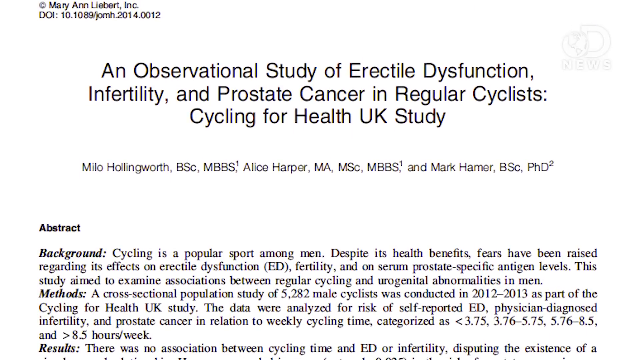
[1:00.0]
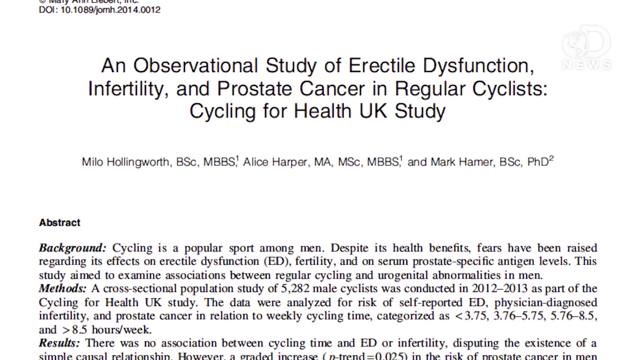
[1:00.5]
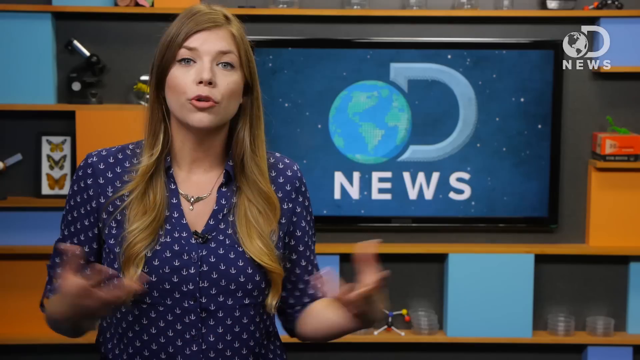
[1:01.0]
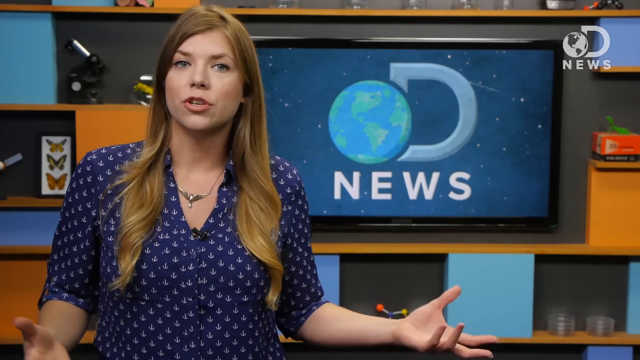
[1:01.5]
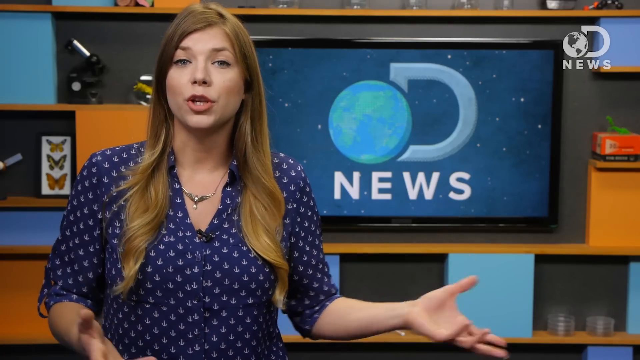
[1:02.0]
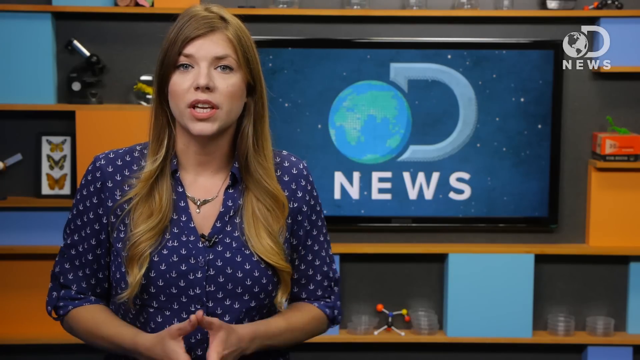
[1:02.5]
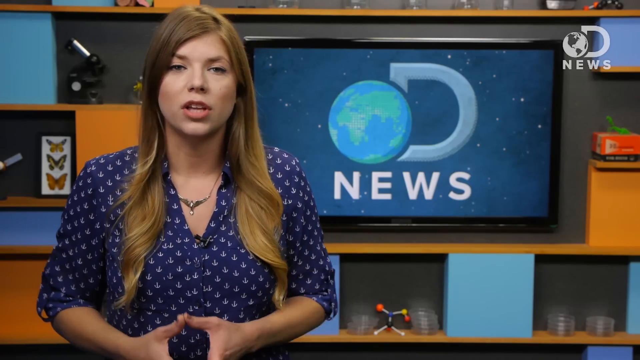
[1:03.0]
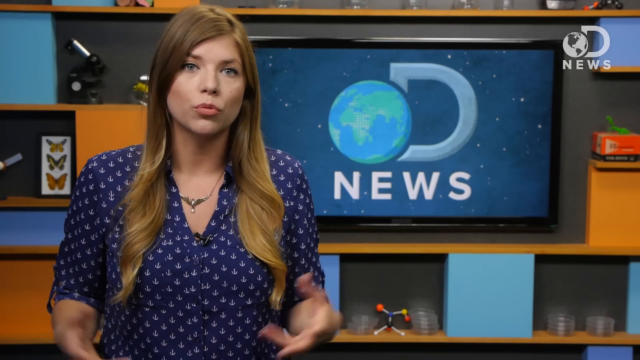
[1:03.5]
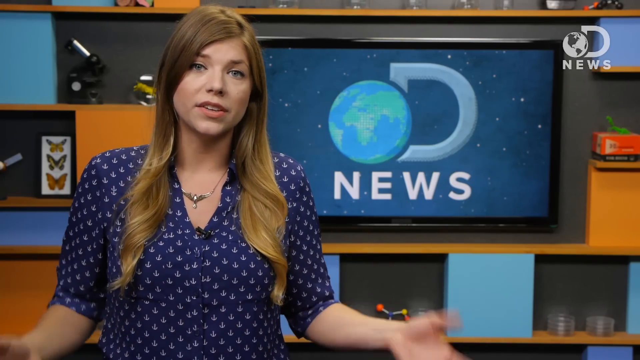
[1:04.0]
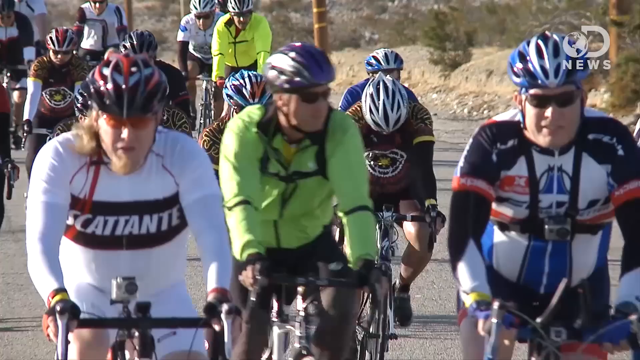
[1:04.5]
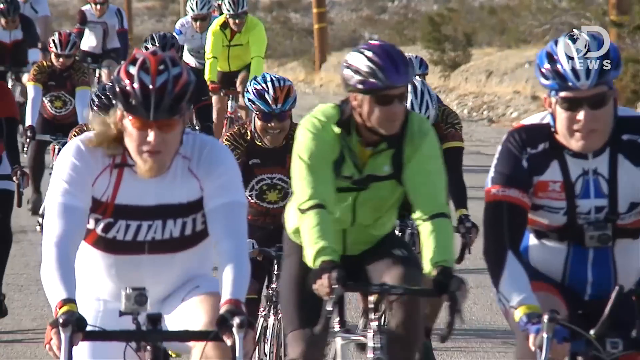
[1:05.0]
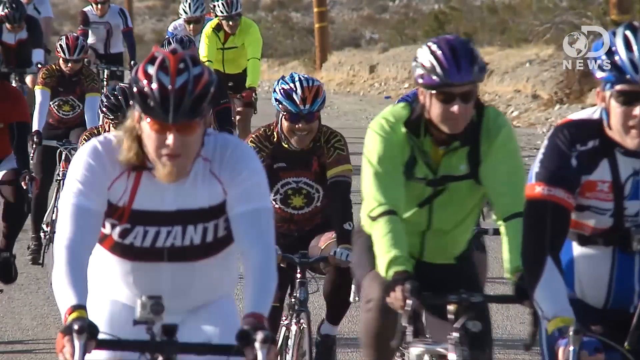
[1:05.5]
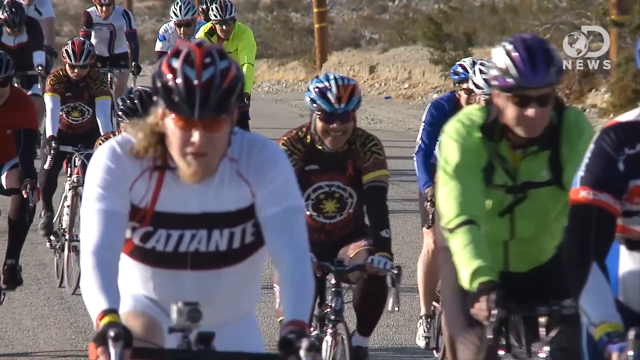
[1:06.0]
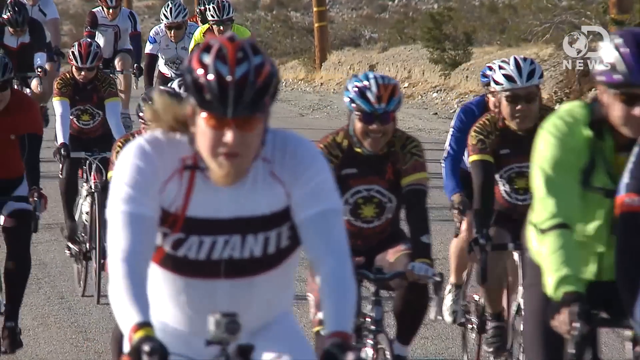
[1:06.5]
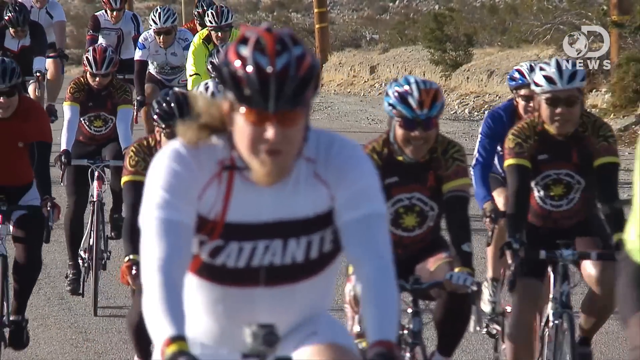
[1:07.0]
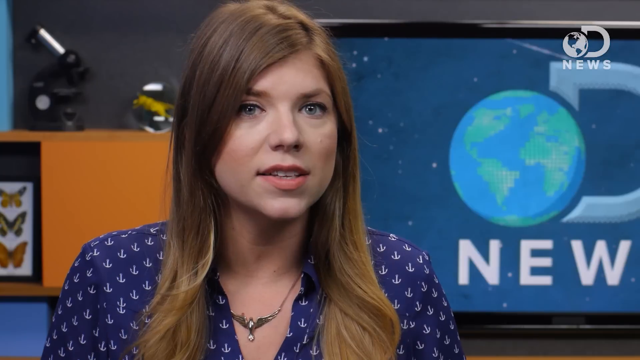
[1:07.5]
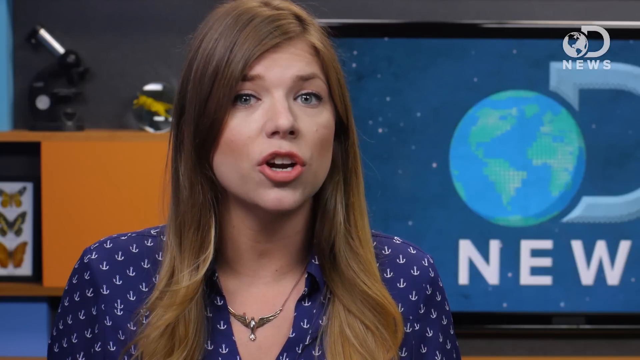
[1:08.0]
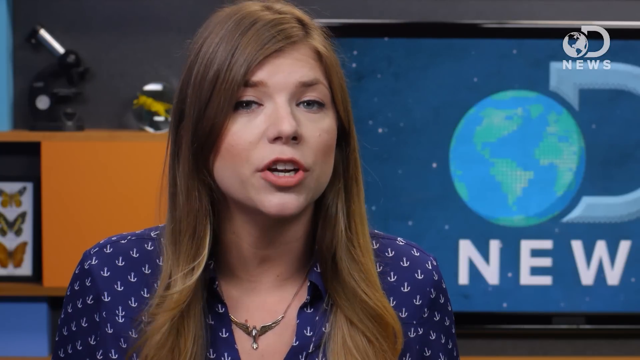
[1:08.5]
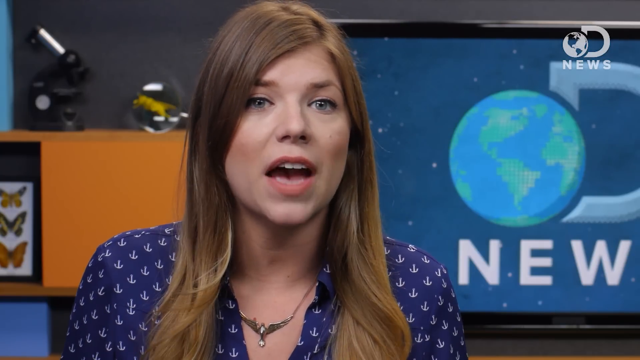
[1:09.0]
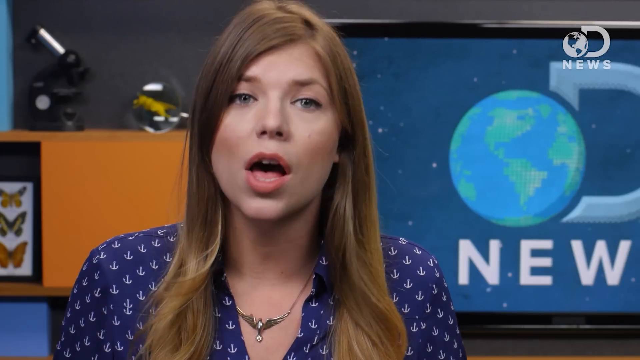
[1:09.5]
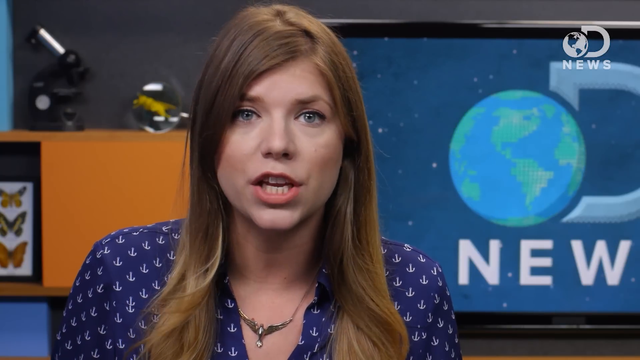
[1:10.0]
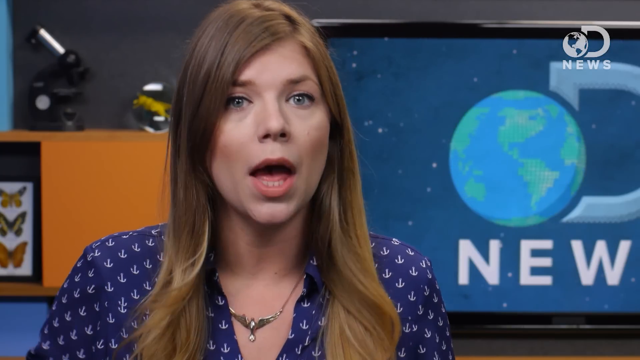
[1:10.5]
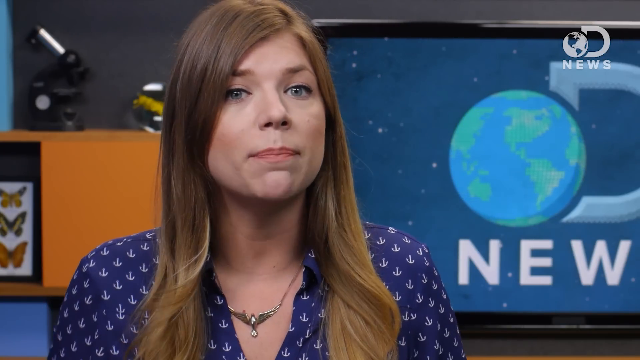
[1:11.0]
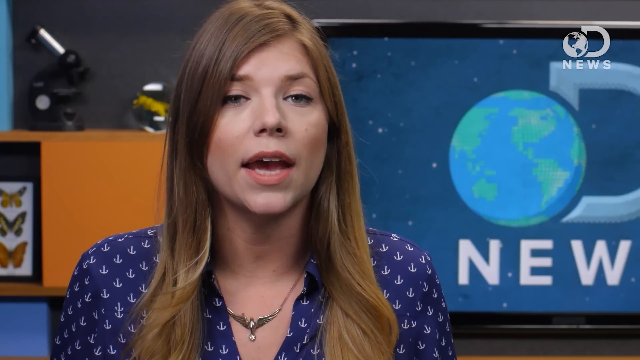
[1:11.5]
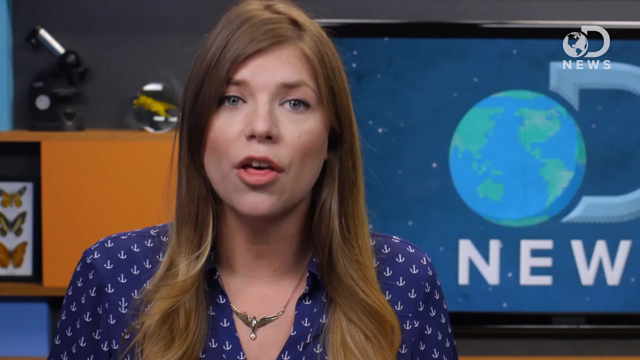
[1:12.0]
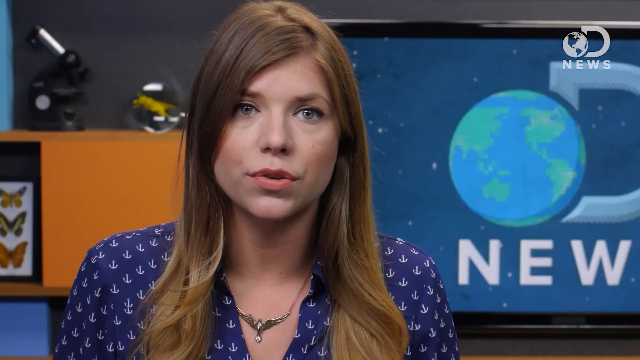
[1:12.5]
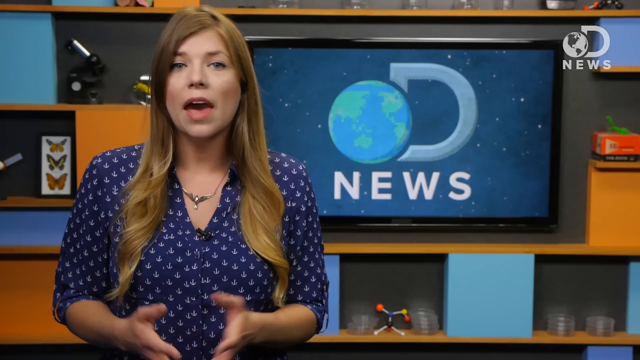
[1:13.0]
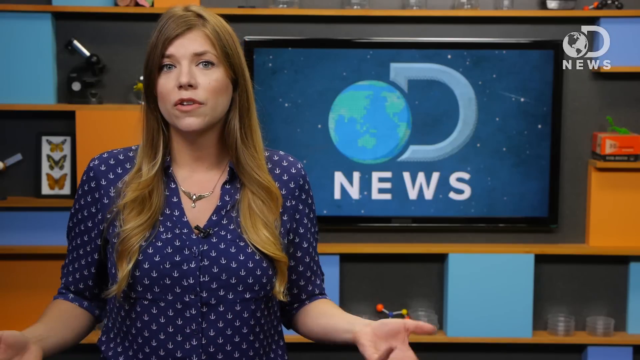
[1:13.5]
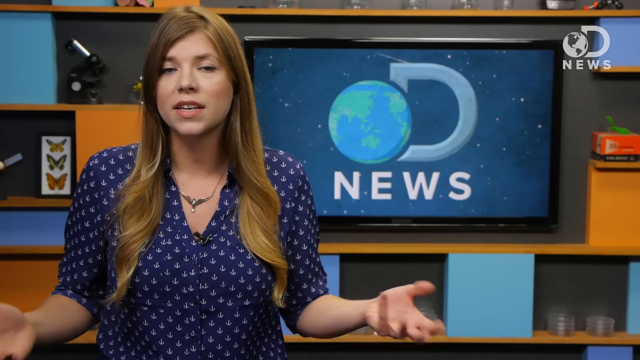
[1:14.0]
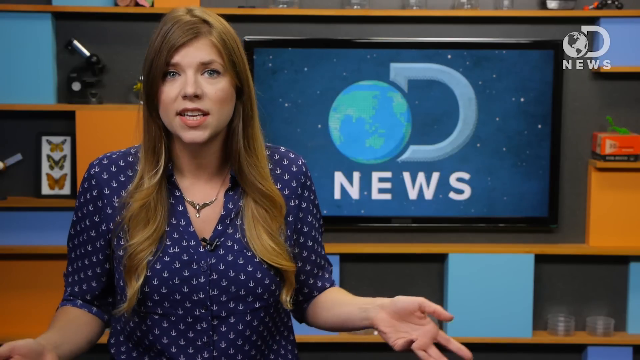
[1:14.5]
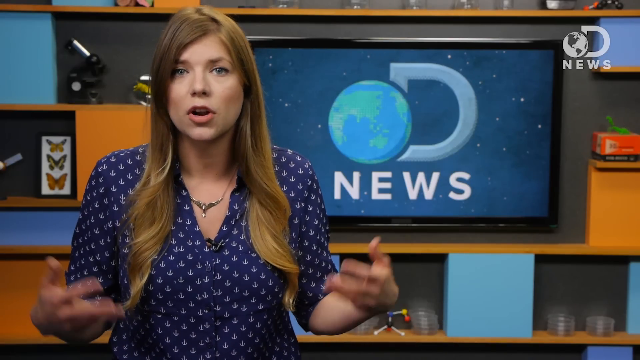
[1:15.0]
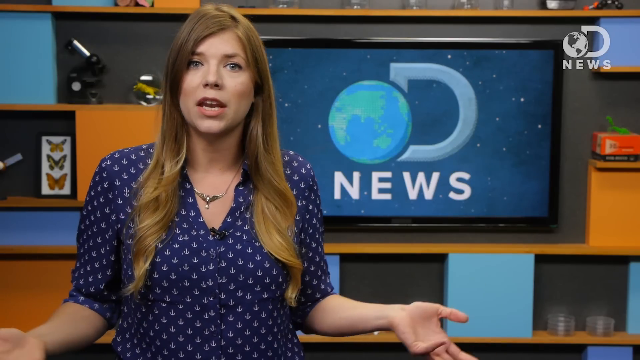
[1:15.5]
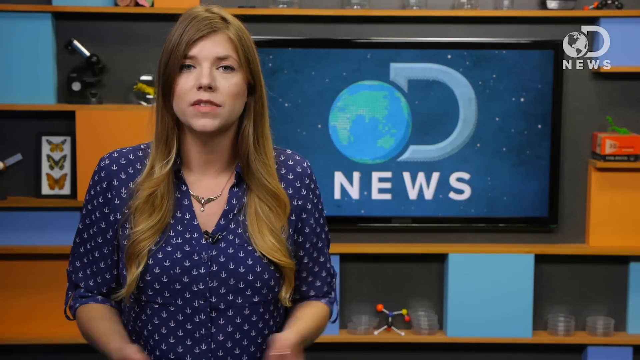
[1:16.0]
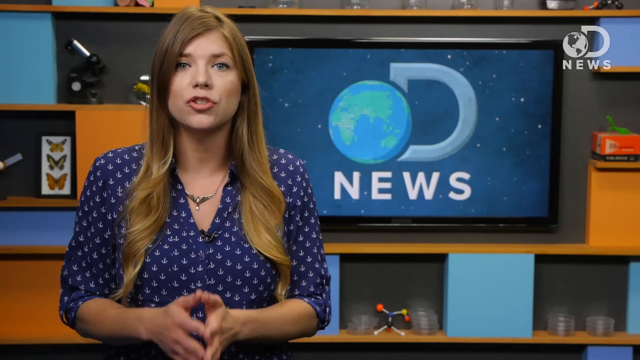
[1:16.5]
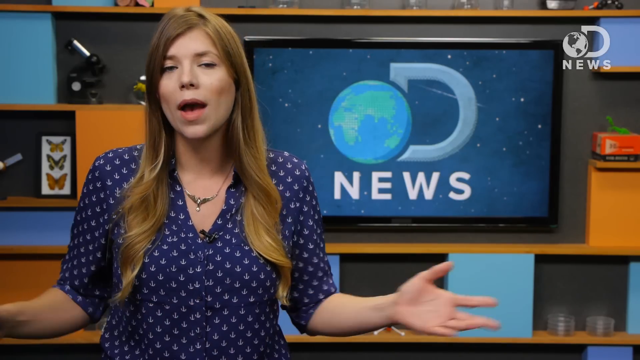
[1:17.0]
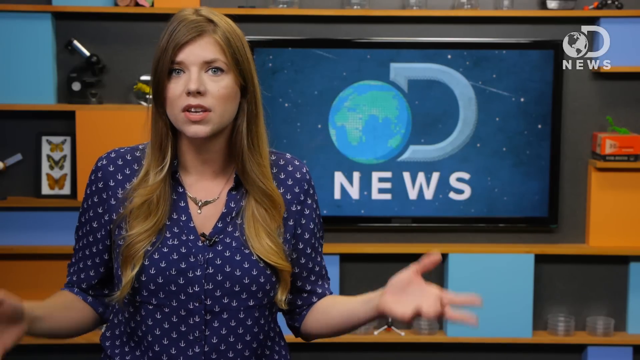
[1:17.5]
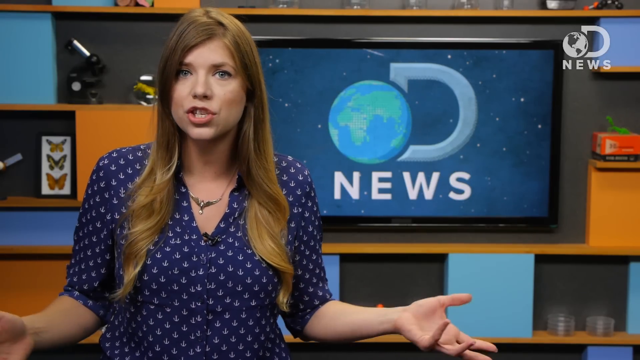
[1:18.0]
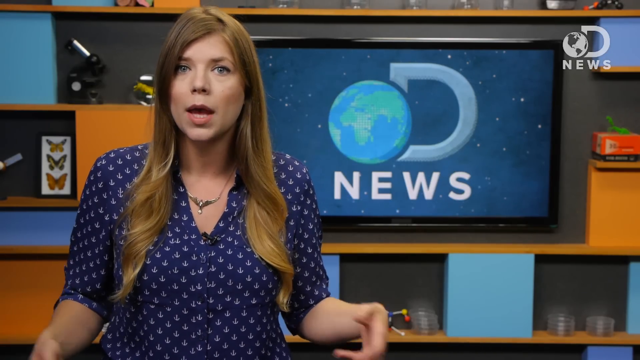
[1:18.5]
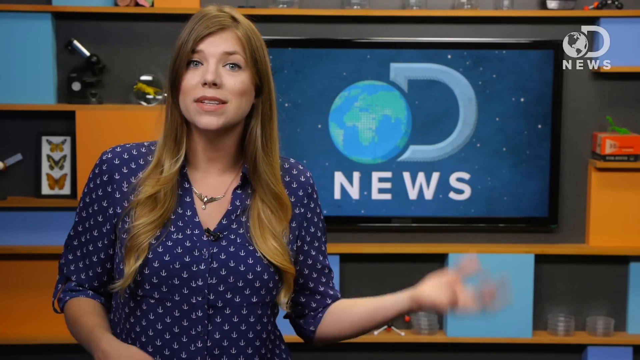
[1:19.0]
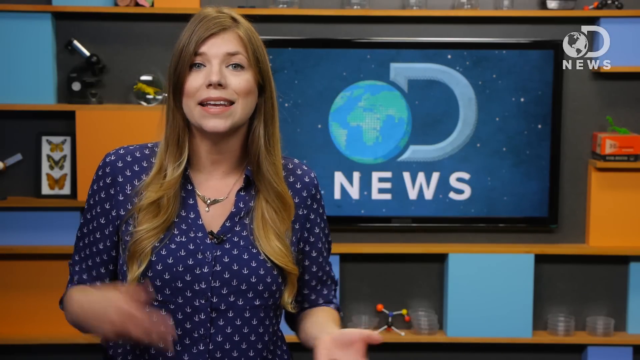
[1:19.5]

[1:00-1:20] The study text continues with "UK study", "abstract" and "Cycling is a popular sport." A person with long hair waves their hands around and appears to wear a necklace, with a screen showing Discovery News. Footage shows people apparently wearing uniforms and apparently helmets, on a road with dirt and a lot of dry grass. The person keeps talking with many hand motions and movements. Text states that there are health benefits but also fears regarding the effects on erectile dysfunction, fertility and serum prostate specific antigen levels, that the study aimed to examine the association with regular cycling, and that a cross-sectional population study of 5,282 male cyclists was conducted.